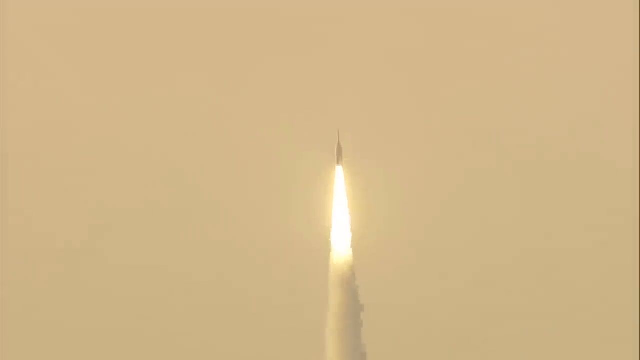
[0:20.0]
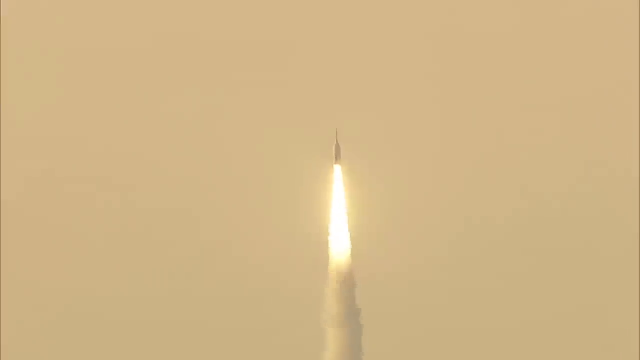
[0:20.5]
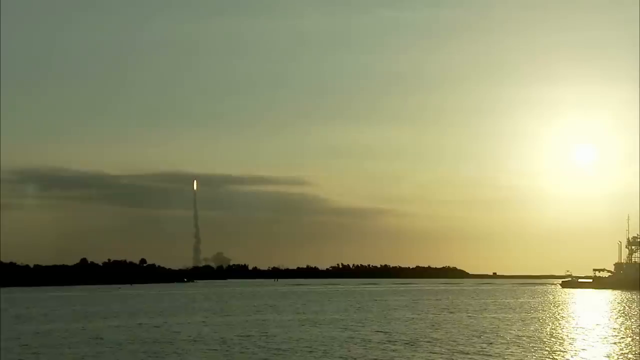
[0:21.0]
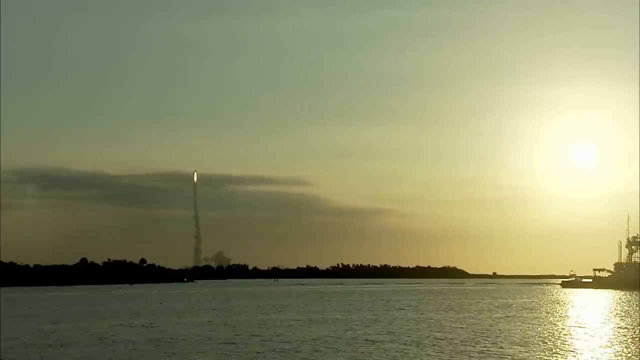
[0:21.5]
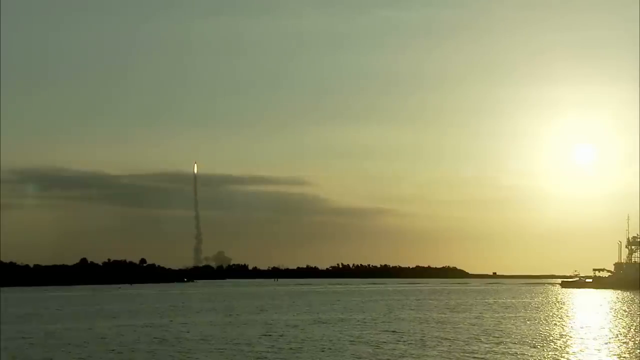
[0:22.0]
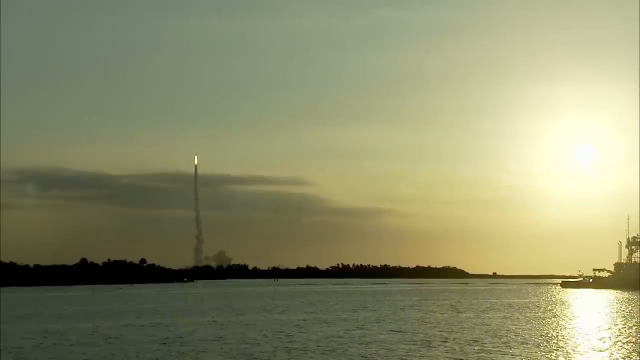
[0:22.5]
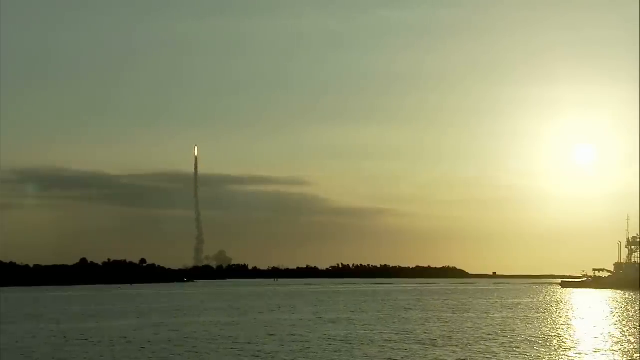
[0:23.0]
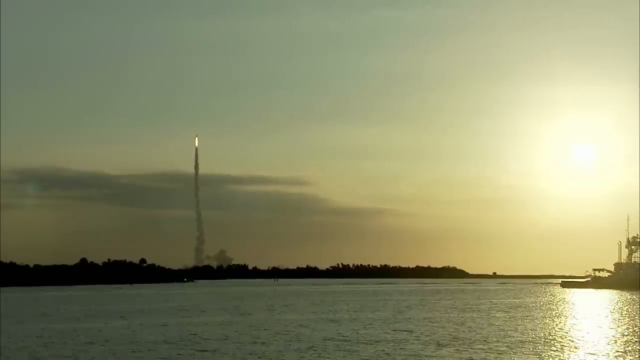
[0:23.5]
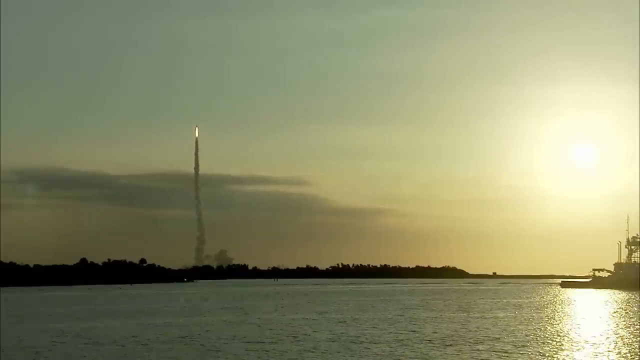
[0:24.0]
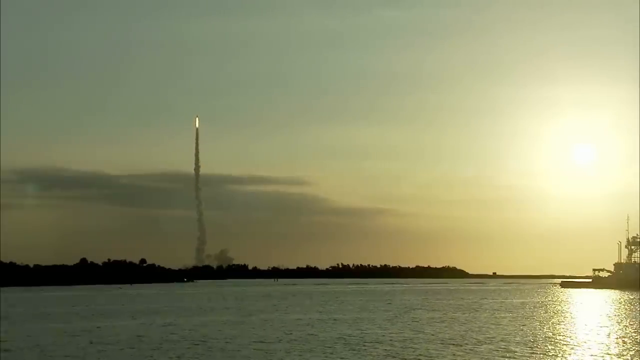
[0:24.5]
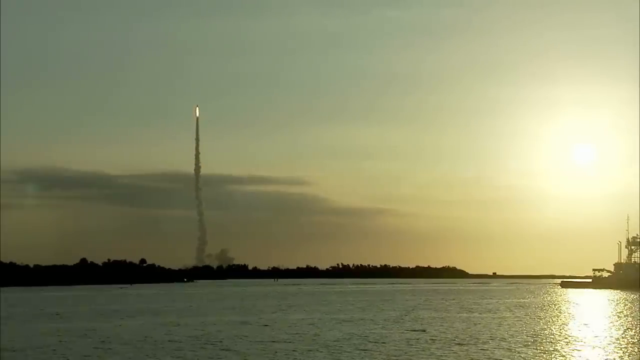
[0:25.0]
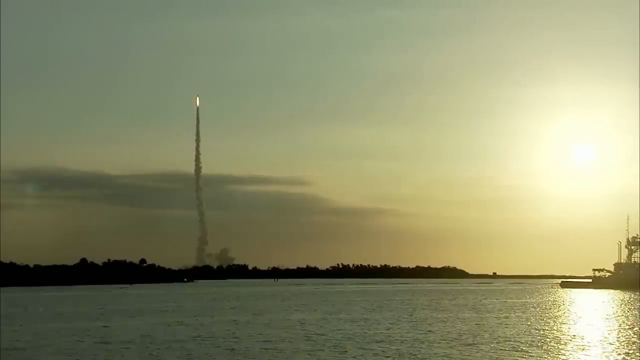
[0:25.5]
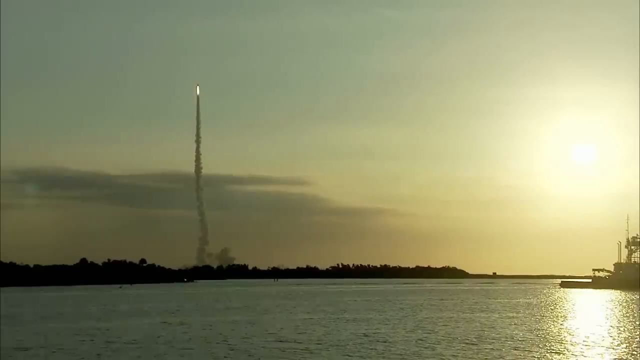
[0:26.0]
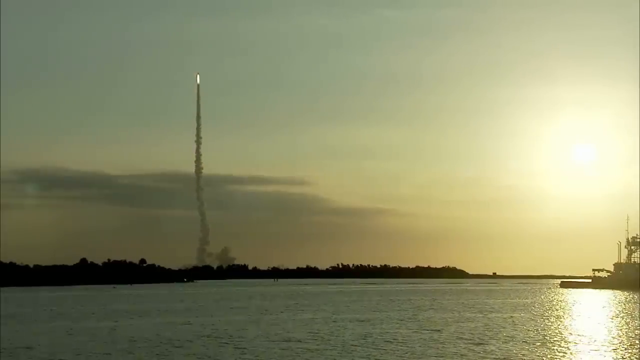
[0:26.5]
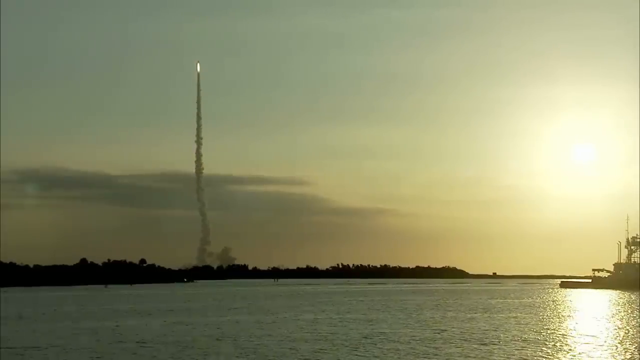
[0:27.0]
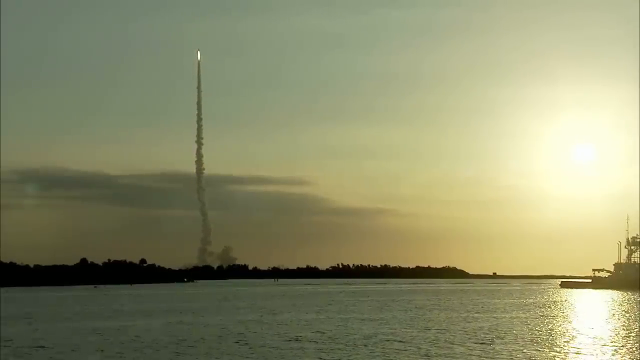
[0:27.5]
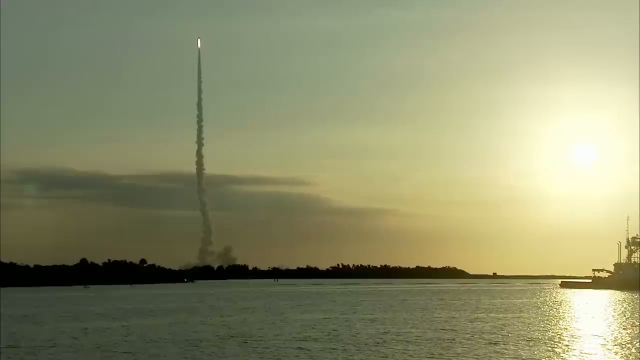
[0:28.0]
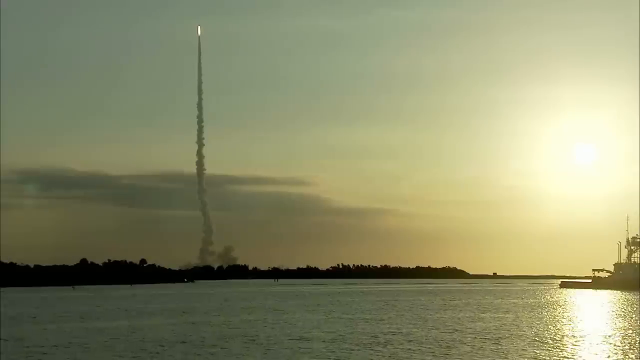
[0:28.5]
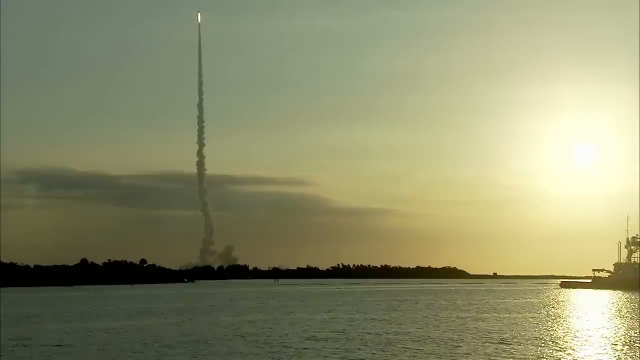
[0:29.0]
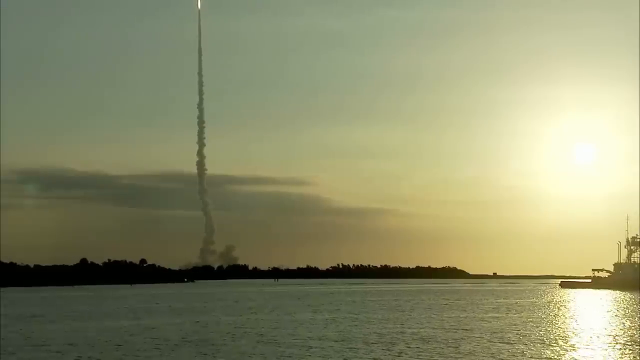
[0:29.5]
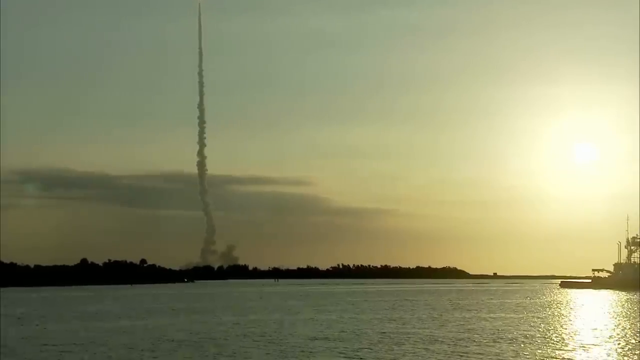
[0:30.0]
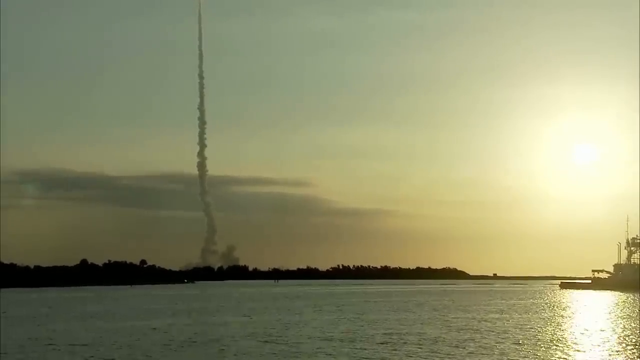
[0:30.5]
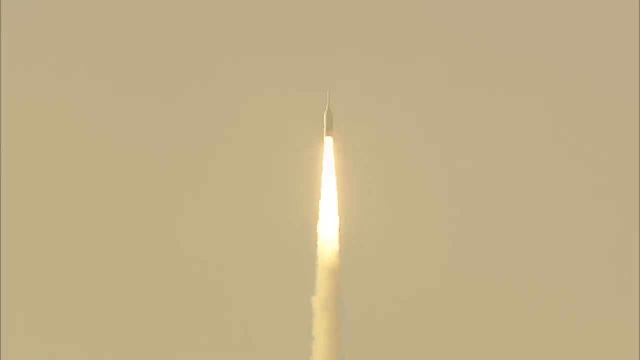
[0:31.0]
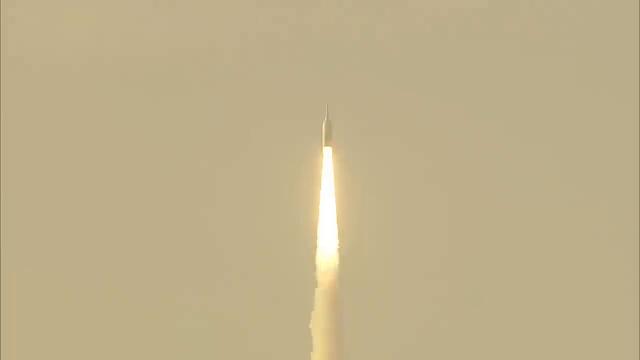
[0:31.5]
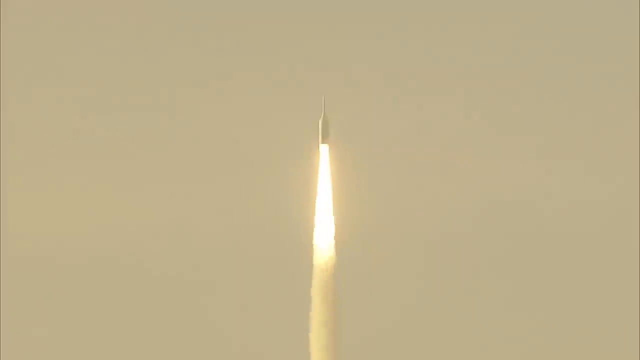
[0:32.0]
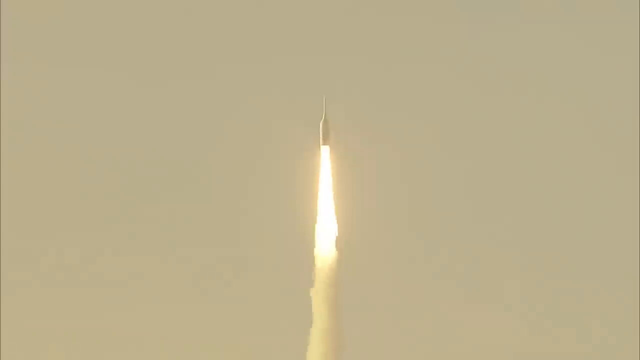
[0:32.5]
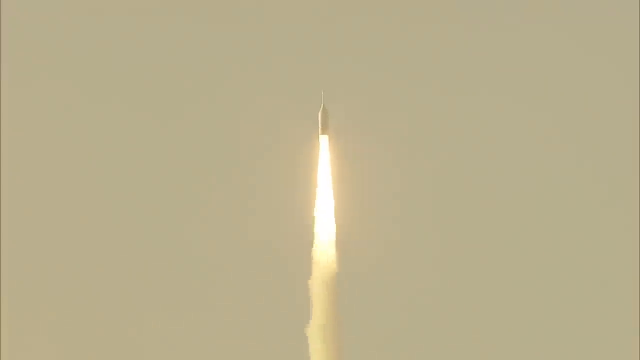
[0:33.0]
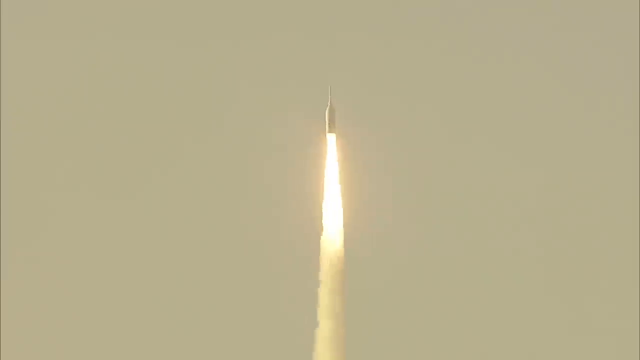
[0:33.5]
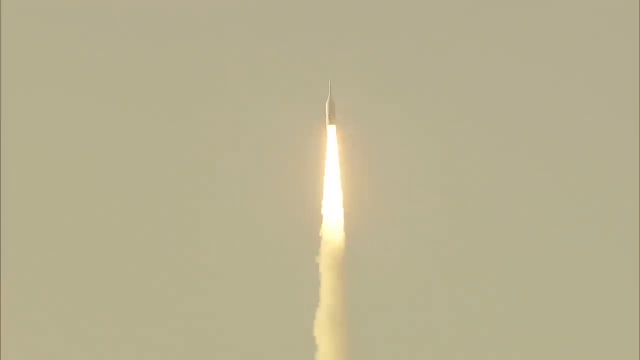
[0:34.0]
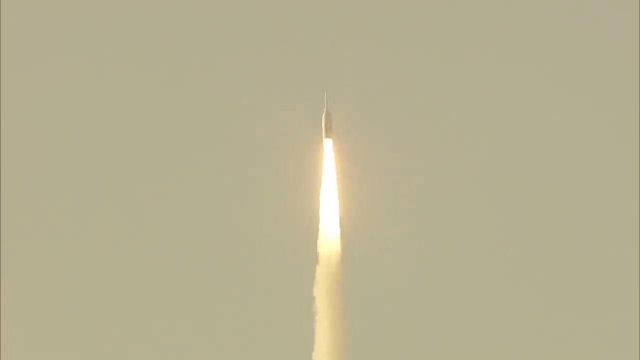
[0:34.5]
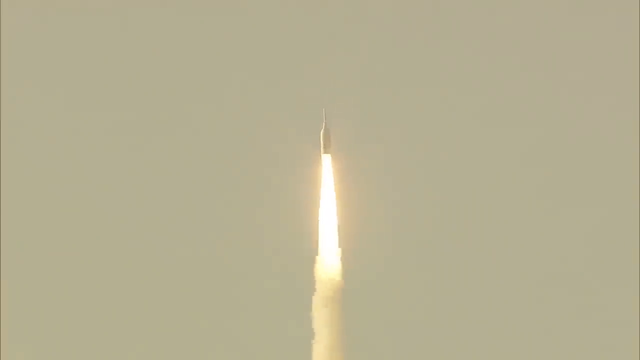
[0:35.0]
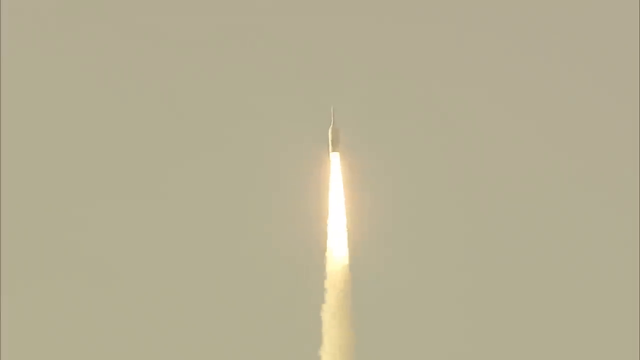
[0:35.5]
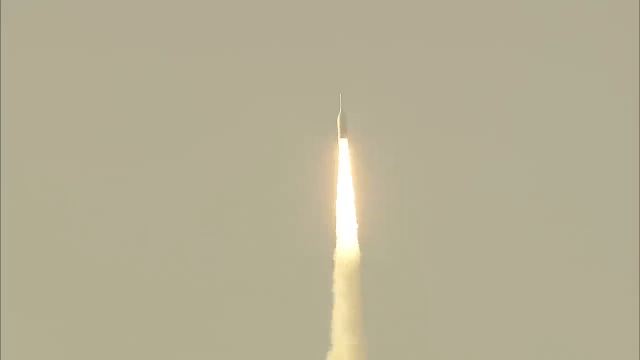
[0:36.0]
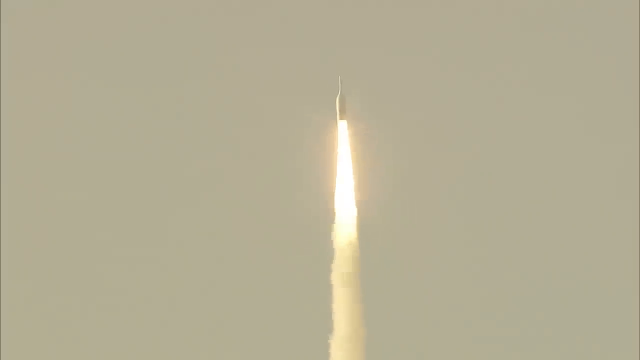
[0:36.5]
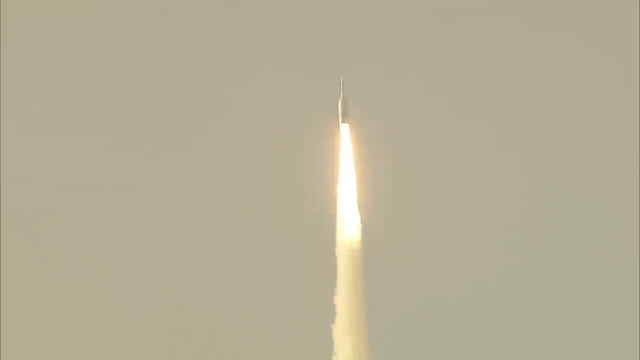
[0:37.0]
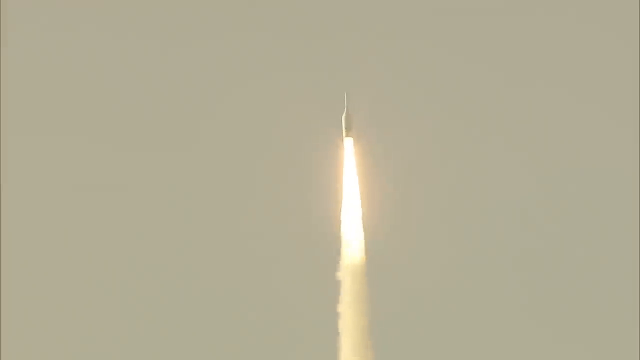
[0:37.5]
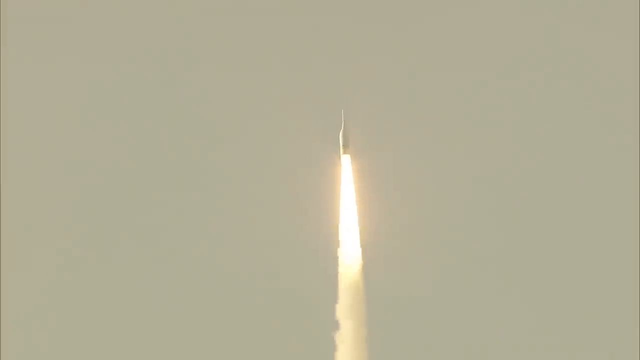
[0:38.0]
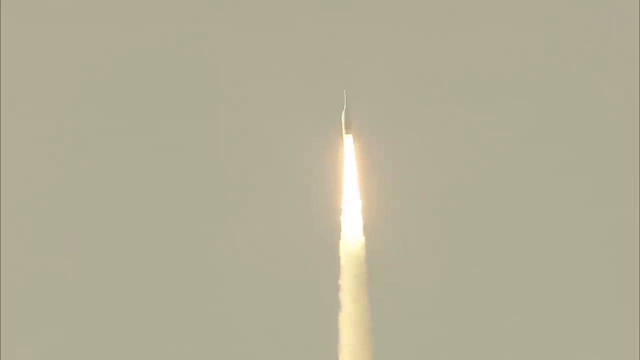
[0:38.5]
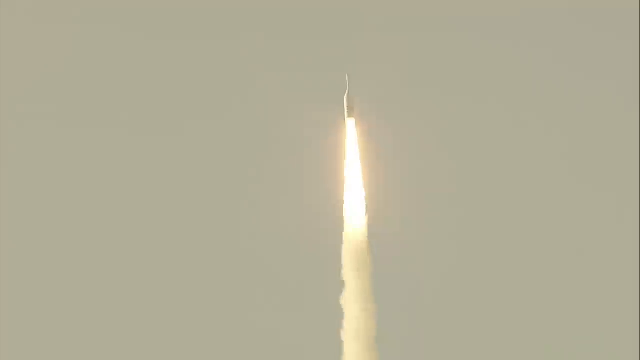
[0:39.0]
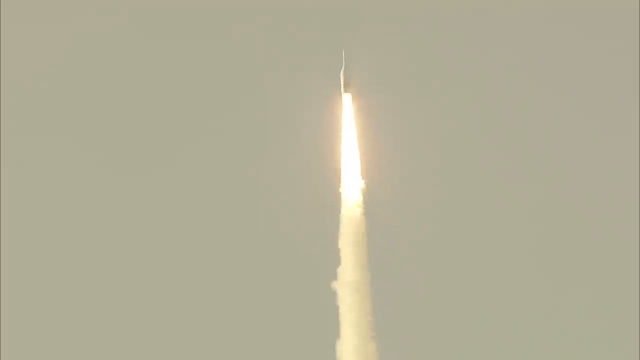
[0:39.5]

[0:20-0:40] The rocket blasts off into the sky, seen from far away so it looks like a small cylinder on the screen. A large, bright white column of fire with a kind of yellow and orange glow is underneath it, with a column of smoke billowing below as the rocket flies upward. The sky around it looks kind of grayish pink, and sunlight reflects on the left side of the rocket, making that side look very shiny. In an even more distant shot, the rocket looks like a tiny black dot with the white flame underneath and billowing smoke trailing to the ground. A lake is visible, with the sun on the right, partly obscured by clouds, reflecting on the water. There appears to be a boat on the right, and trees and shrubs are silhouetted on the lake. Clouds are in the back as the rocket keeps going upward trailing smoke and flames, and the camera shakes a little for a moment. A close-up then shows the rocket bursting up; it is kind of cylinder-shaped with a thin cylinder on top, barreling upward as the smoke ripples.